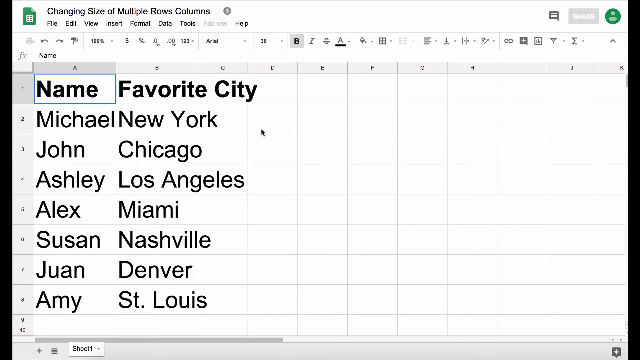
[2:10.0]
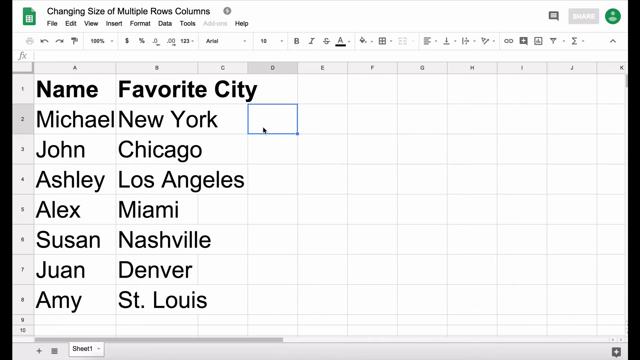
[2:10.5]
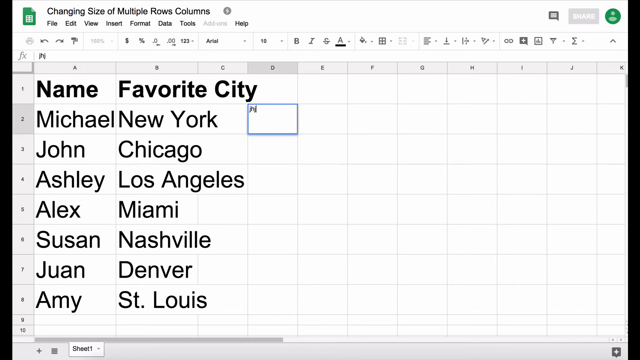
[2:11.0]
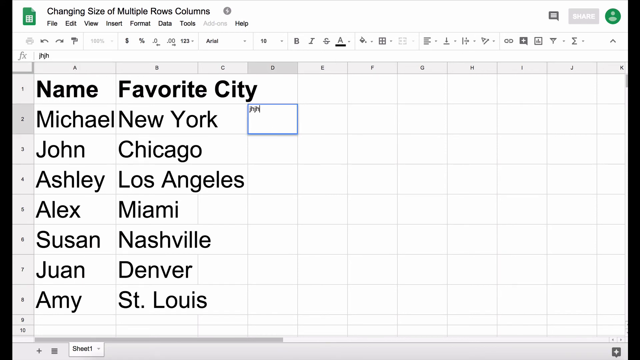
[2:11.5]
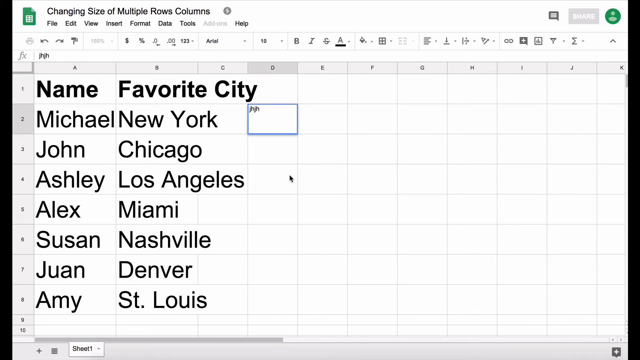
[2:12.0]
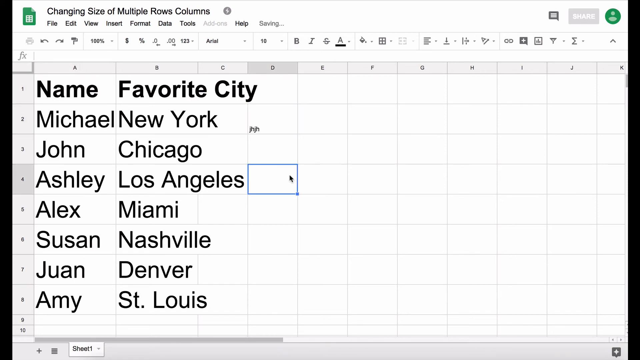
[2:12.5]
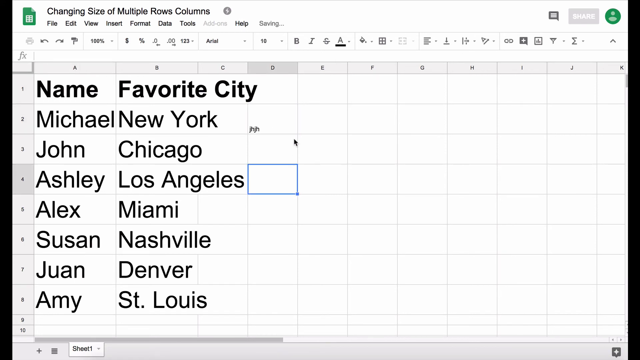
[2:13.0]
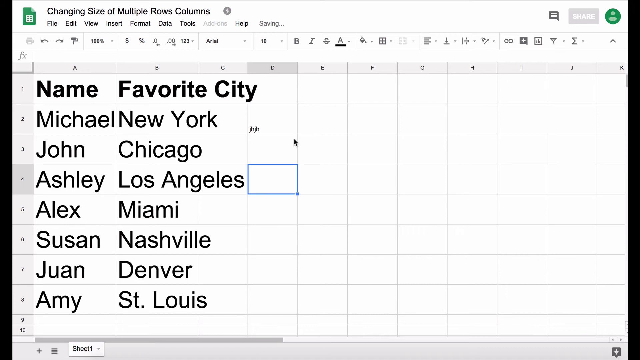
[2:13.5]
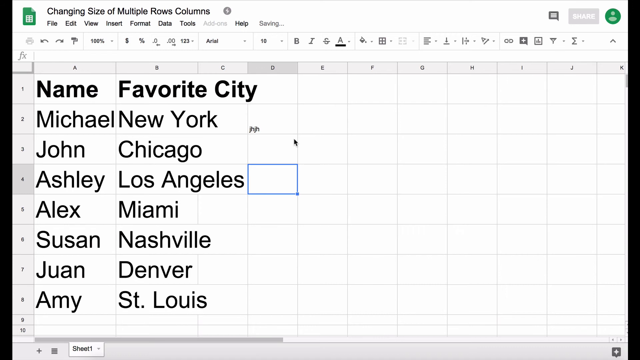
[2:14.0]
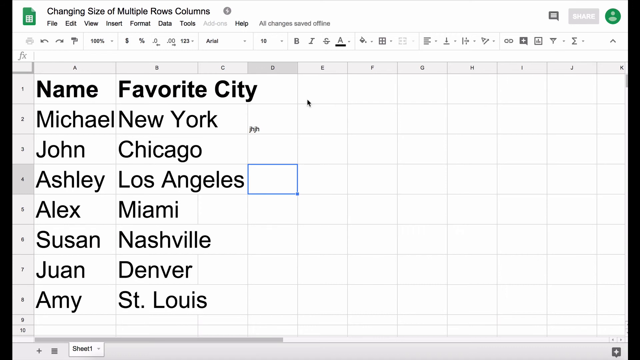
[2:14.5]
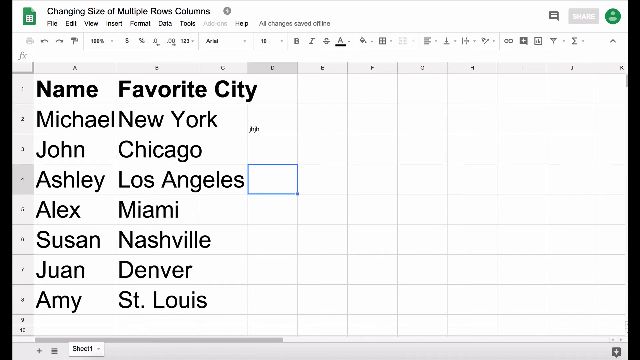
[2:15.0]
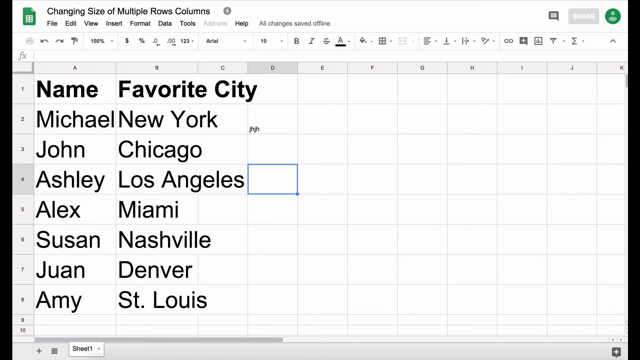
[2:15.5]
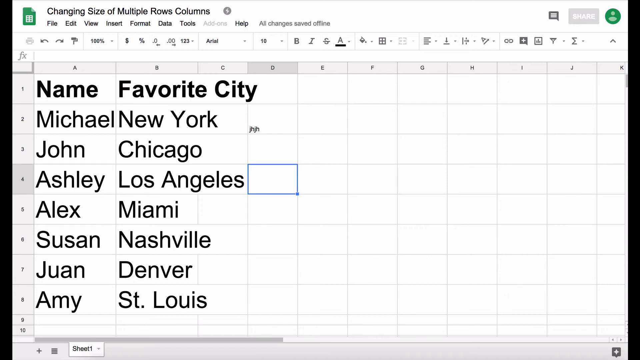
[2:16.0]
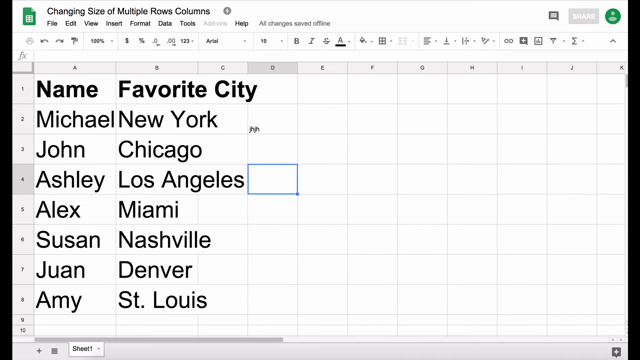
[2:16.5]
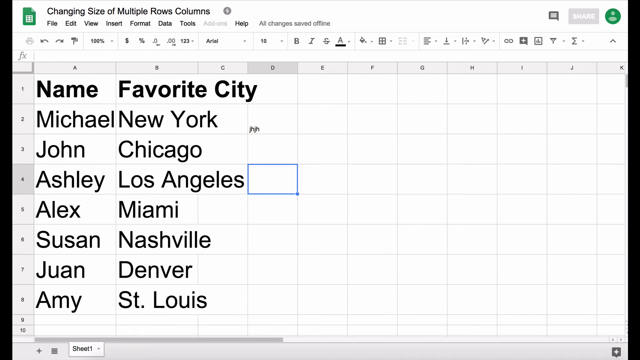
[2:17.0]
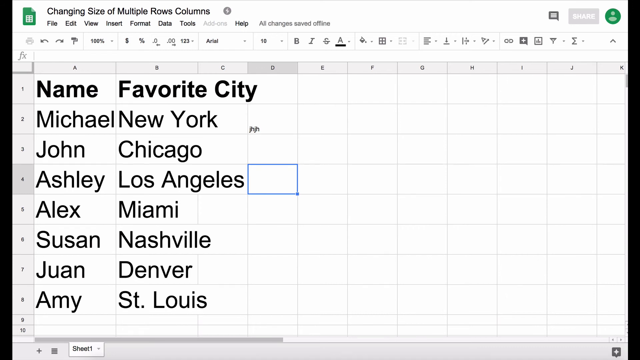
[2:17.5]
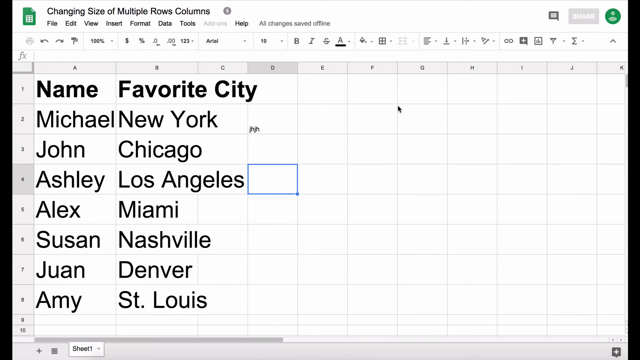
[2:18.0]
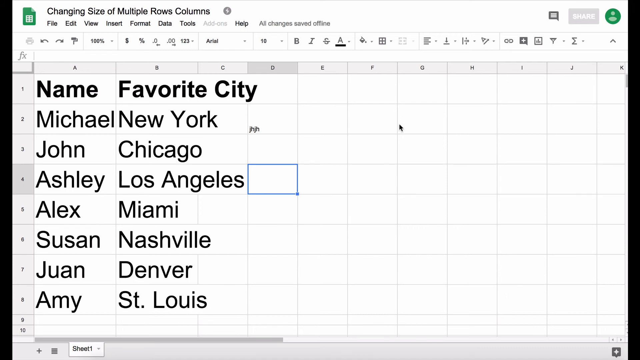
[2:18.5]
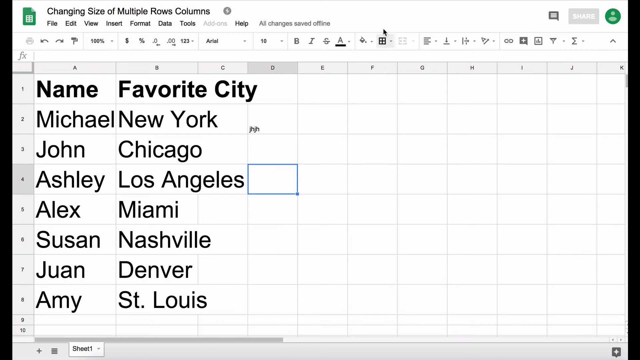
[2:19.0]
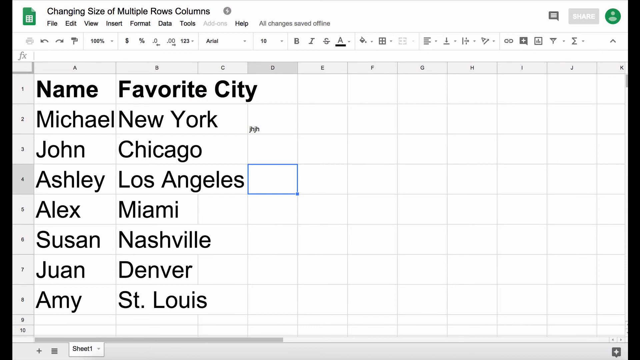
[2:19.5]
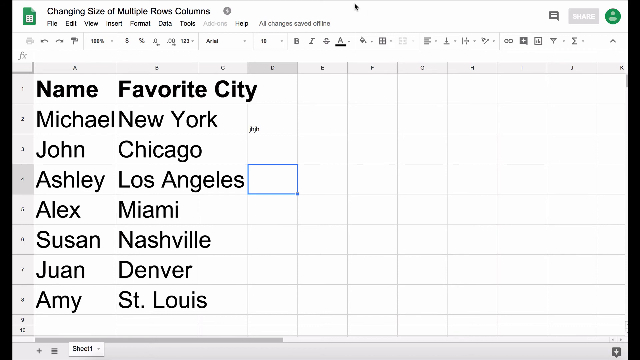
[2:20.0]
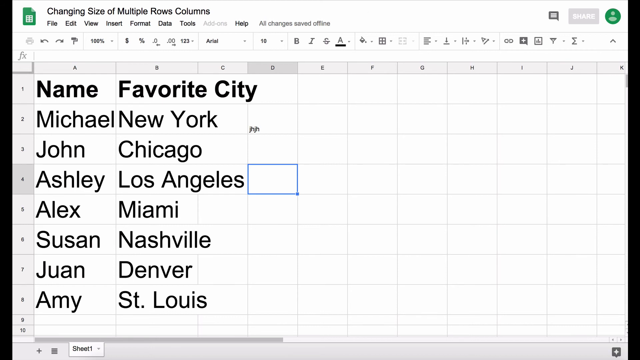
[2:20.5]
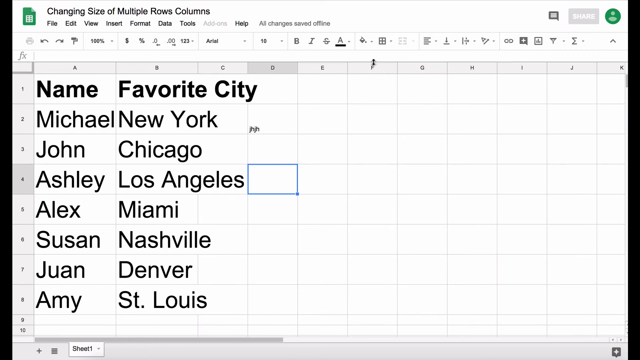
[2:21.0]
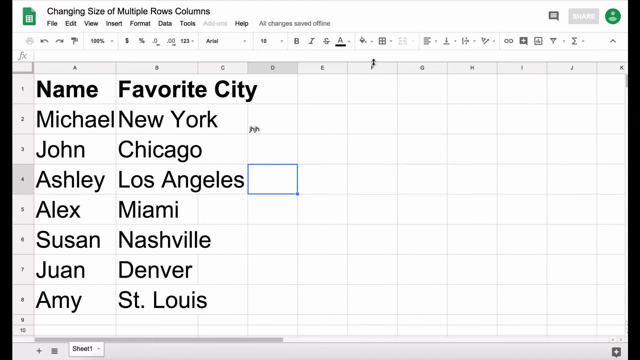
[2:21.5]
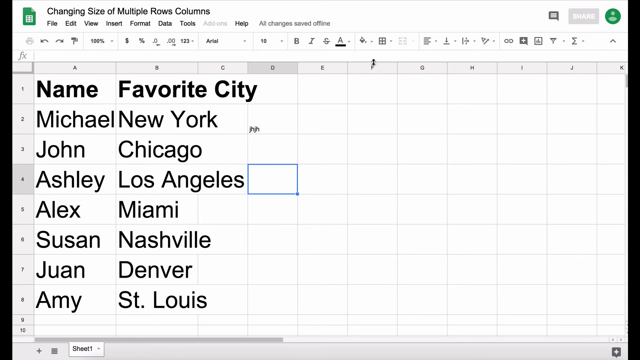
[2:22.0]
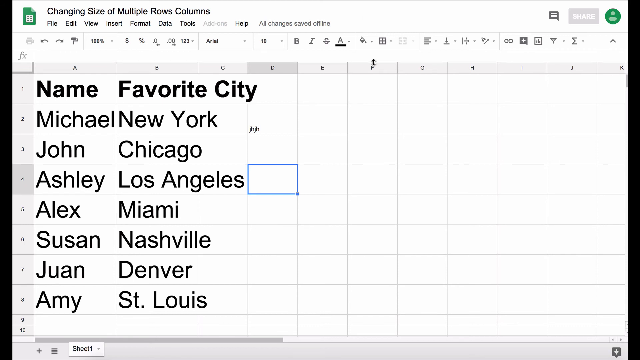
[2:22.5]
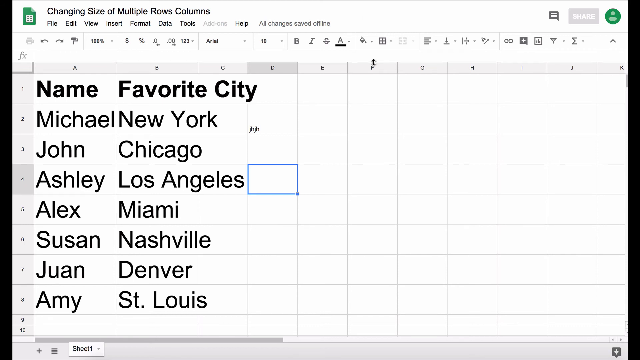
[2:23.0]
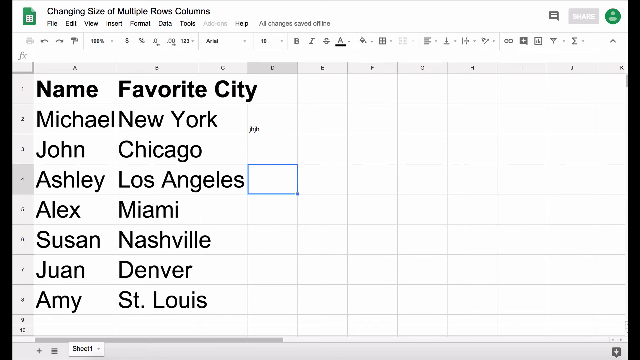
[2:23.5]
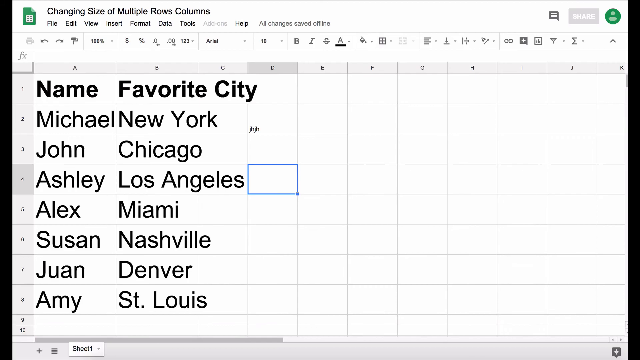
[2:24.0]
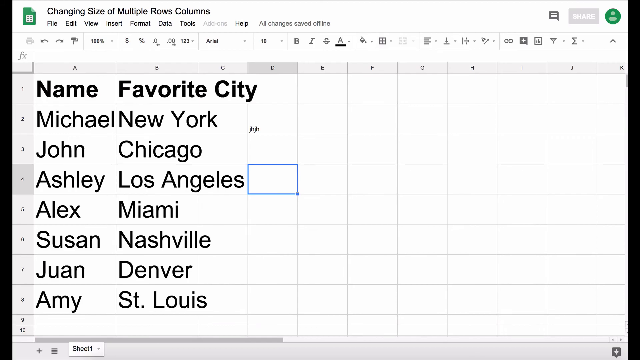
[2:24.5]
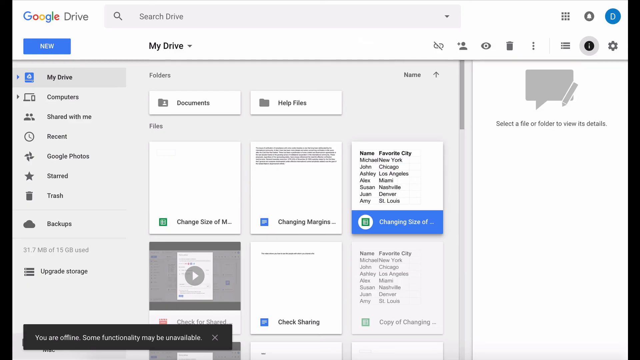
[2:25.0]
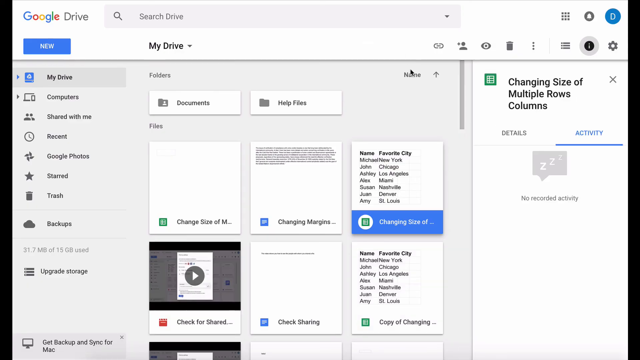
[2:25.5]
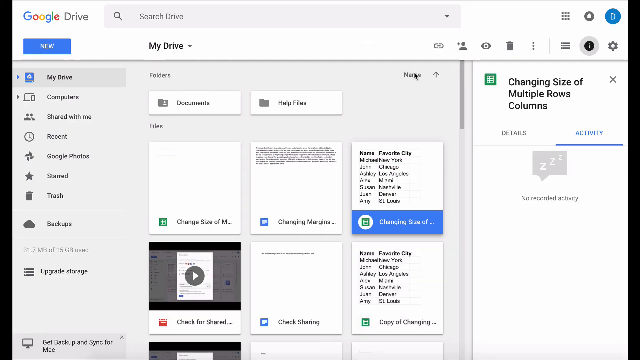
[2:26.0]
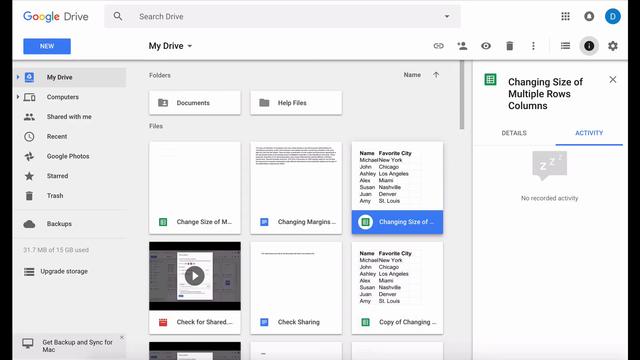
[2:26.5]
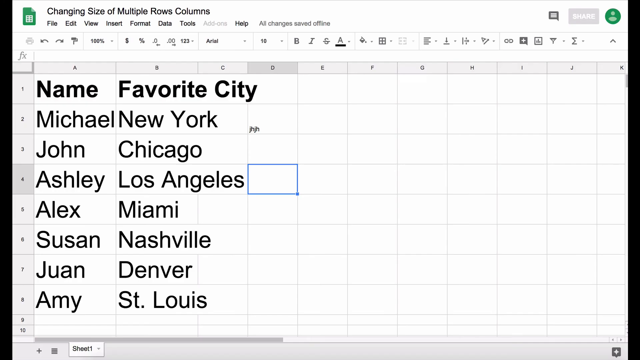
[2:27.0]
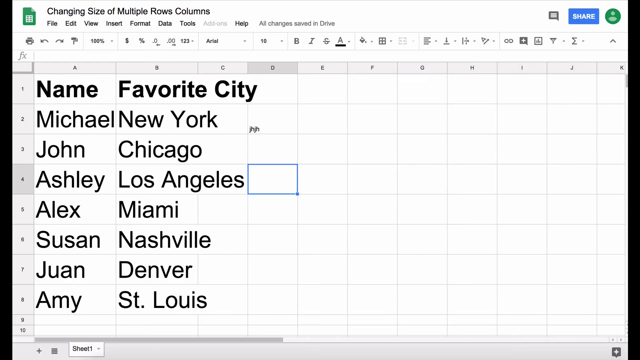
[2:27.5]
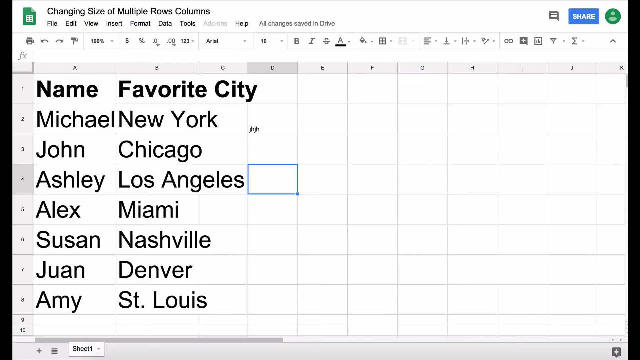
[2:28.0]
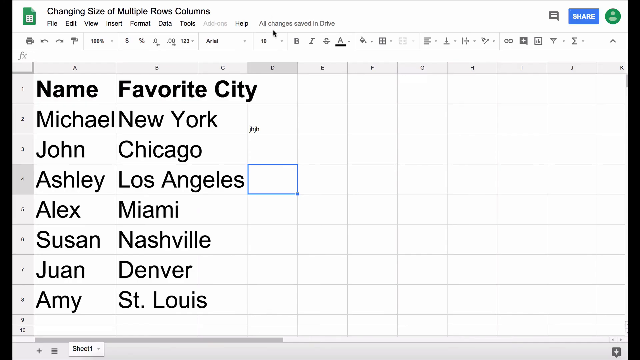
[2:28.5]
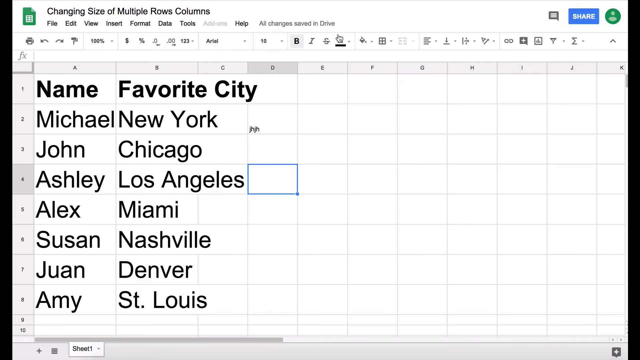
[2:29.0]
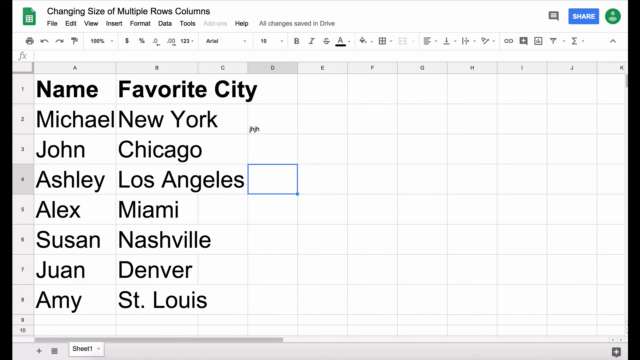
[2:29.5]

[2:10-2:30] What looks like maybe a data entry program is shown, with "changing size of multiple rows and columns" at the top. The menu reads "File", "Edit", "View", "Insert", "Format", "Data", "Tools" and "Help". In the data entry area are "Name" and "Favorite city" with Michael, New York; John, Chicago; Ashley, Los Angeles; Alex, Miami; Susan, Nashville; Juan, Denver; Amy, St. Louis. The user switches back to the Google Drive website, to a page with "Google Drive" at the top left and a search drive bar to the right of it at the top. Below Google Drive are "New", "My Drive", "Computer", "Shared with me", "Recent", "Google Photos", "Starred", "Trash", "Backups" and "Upgrade storage". In the middle are "Documents", "Help files", an item about changing size, and "Changing margins". At the far right are "Changing size of multiple rows and columns", "Details" and "Activity".